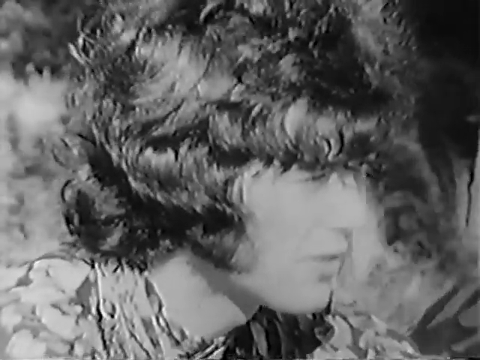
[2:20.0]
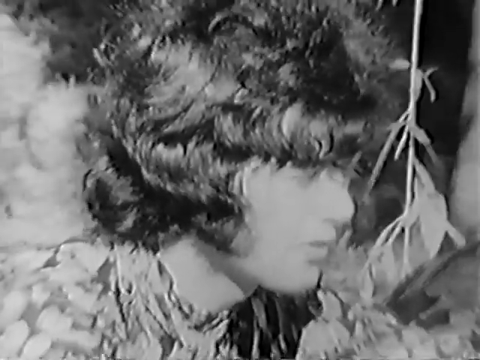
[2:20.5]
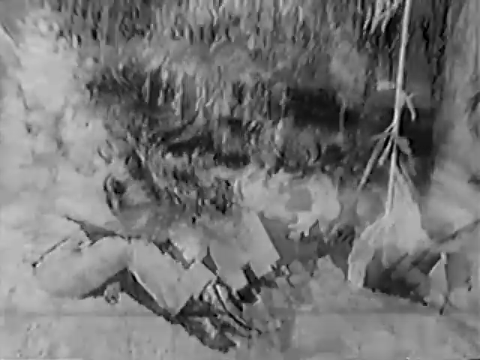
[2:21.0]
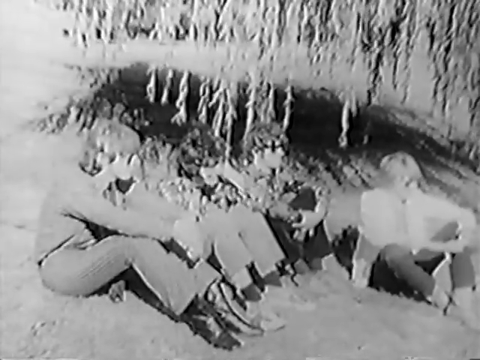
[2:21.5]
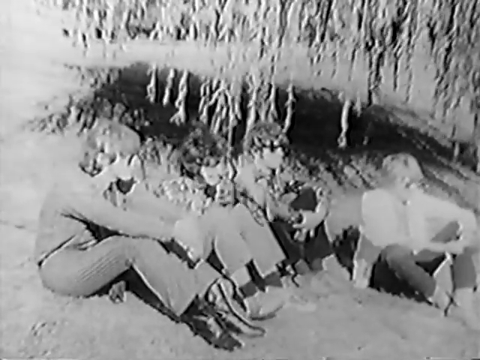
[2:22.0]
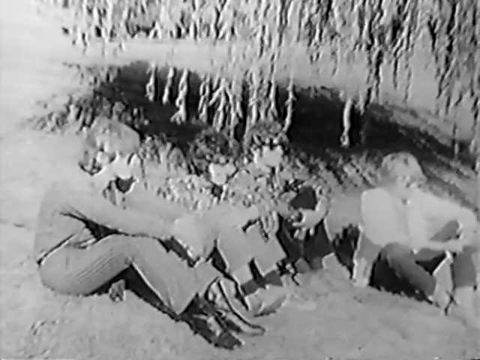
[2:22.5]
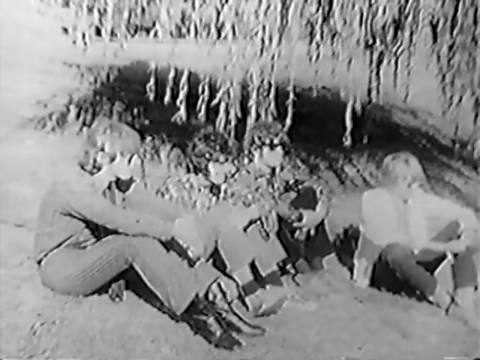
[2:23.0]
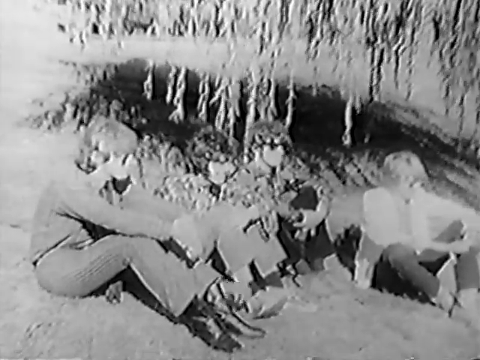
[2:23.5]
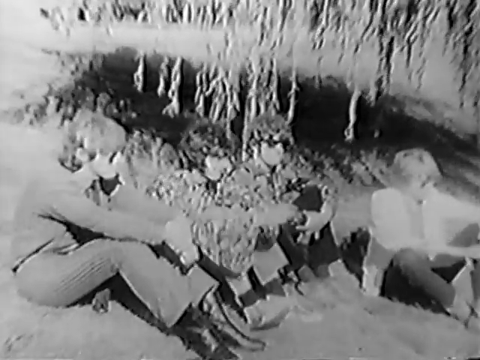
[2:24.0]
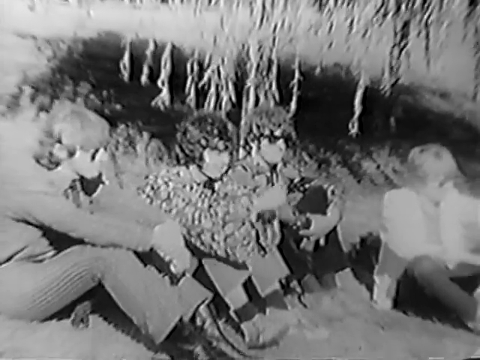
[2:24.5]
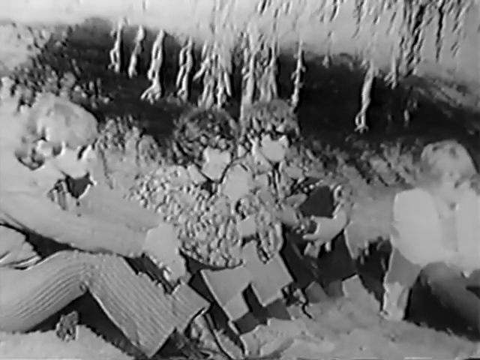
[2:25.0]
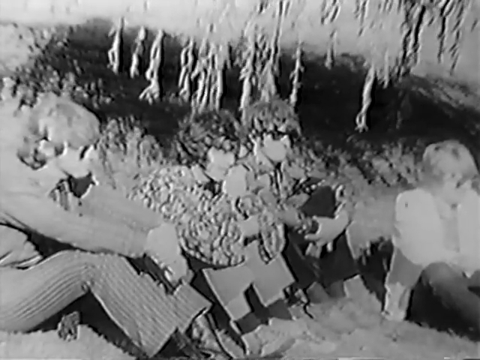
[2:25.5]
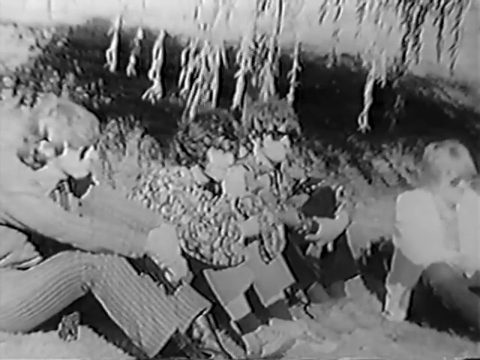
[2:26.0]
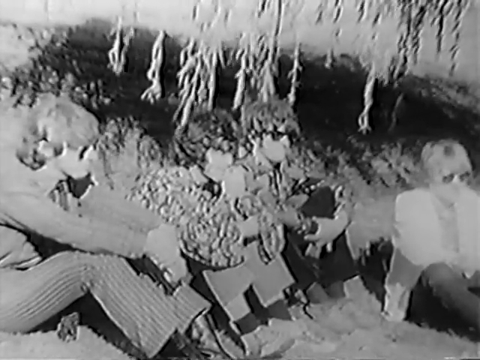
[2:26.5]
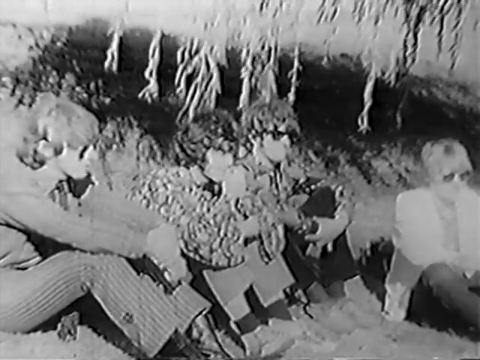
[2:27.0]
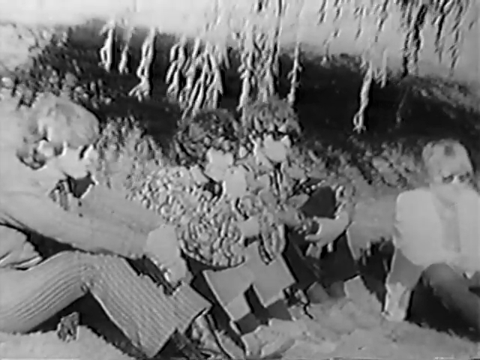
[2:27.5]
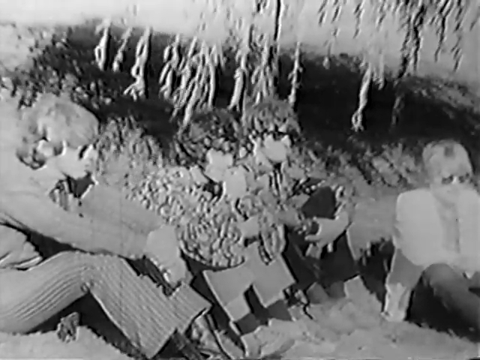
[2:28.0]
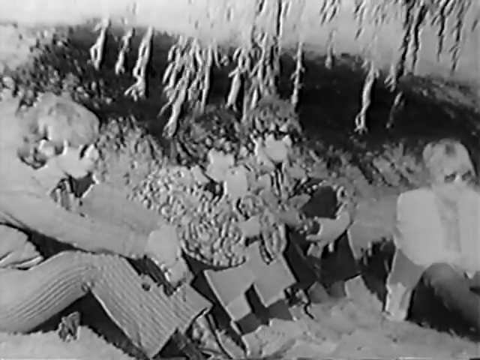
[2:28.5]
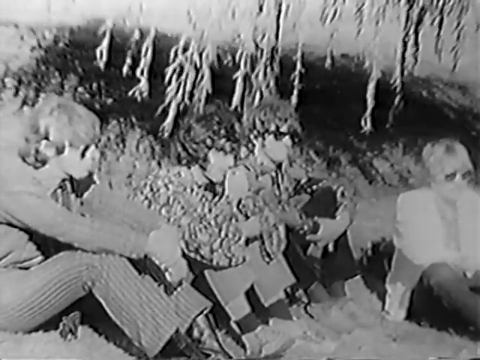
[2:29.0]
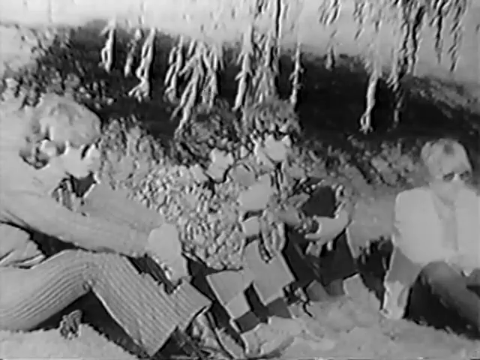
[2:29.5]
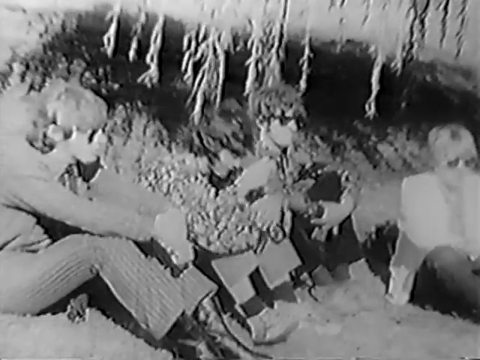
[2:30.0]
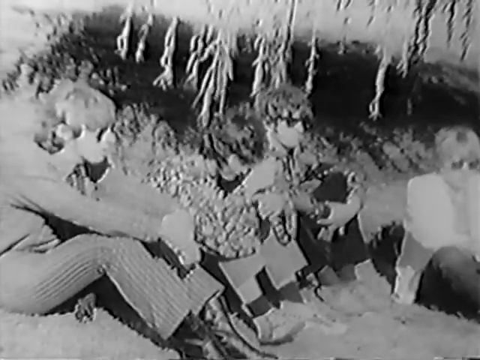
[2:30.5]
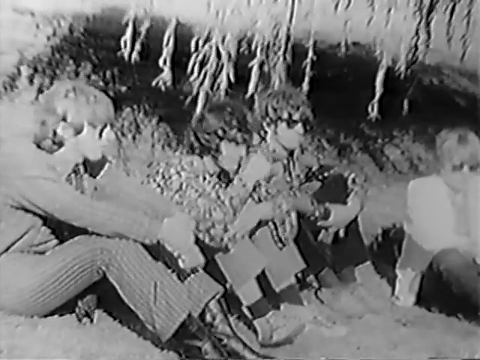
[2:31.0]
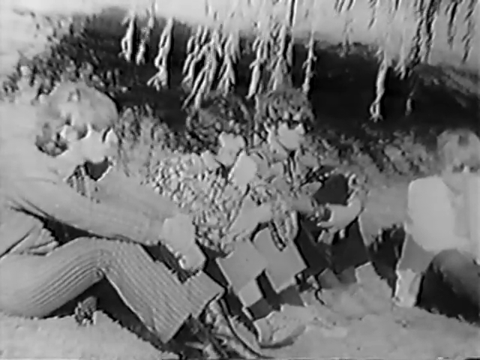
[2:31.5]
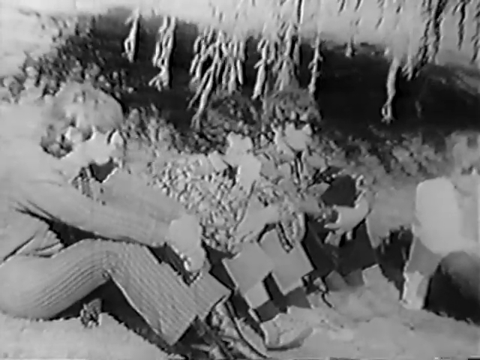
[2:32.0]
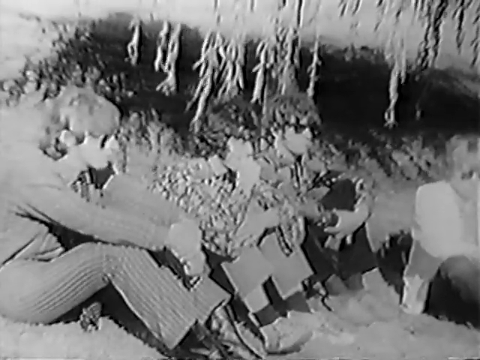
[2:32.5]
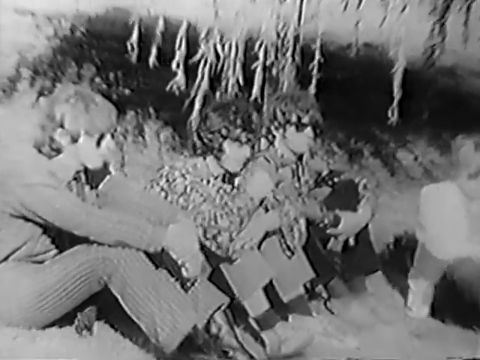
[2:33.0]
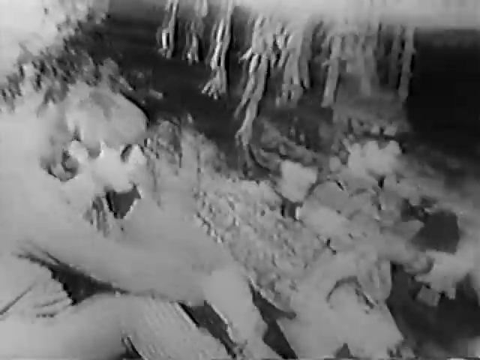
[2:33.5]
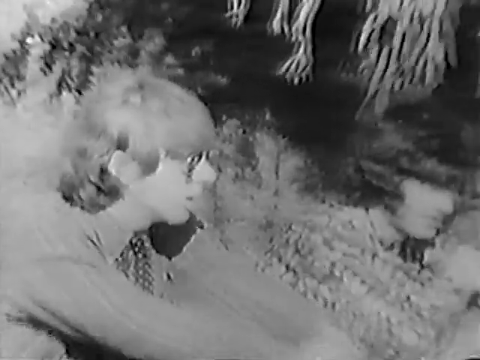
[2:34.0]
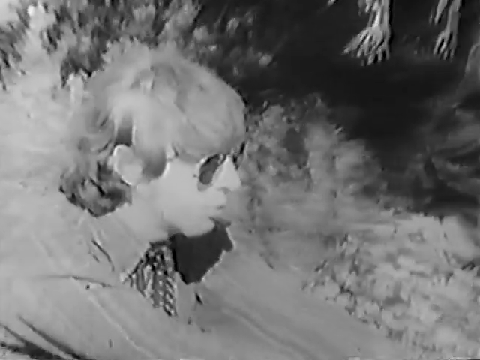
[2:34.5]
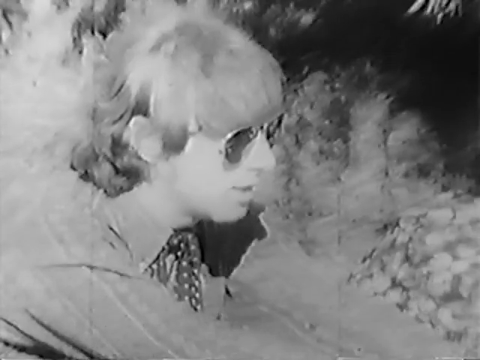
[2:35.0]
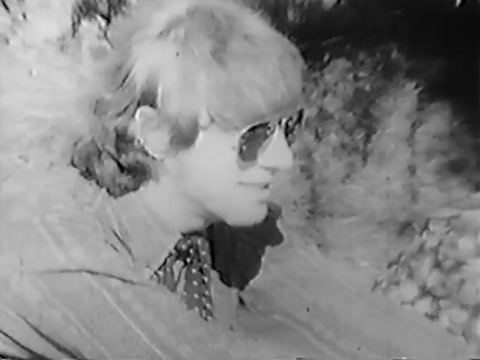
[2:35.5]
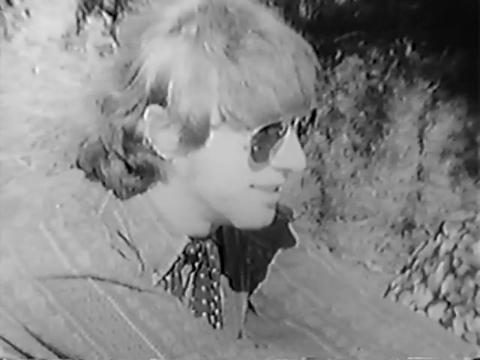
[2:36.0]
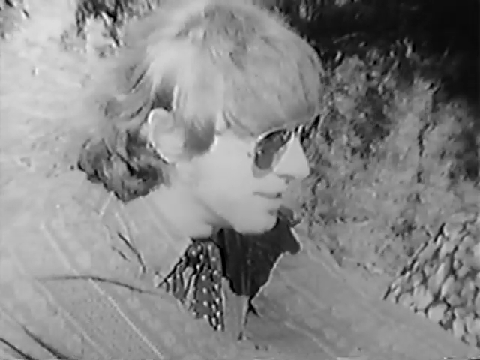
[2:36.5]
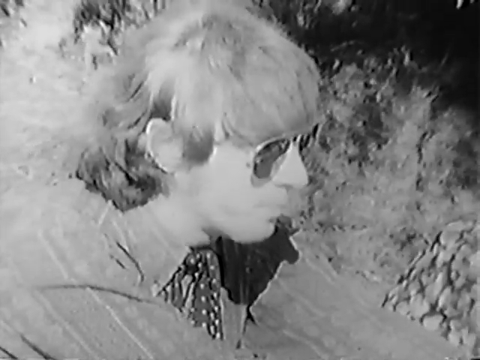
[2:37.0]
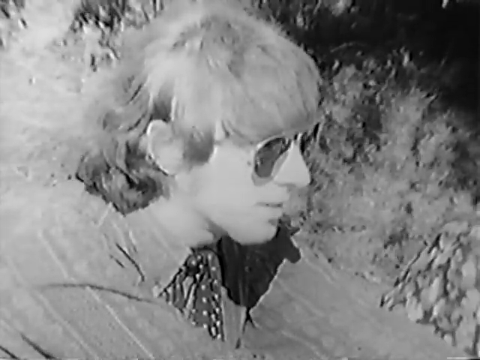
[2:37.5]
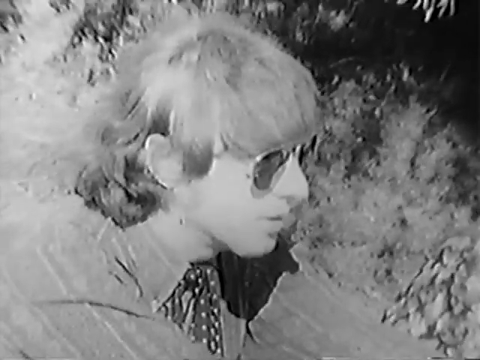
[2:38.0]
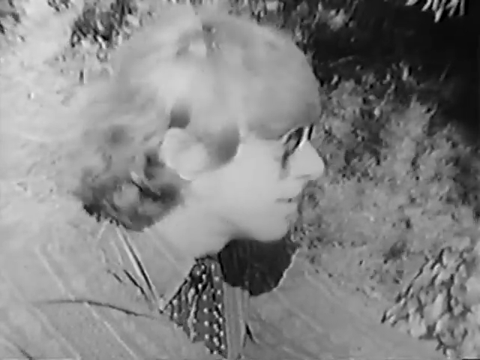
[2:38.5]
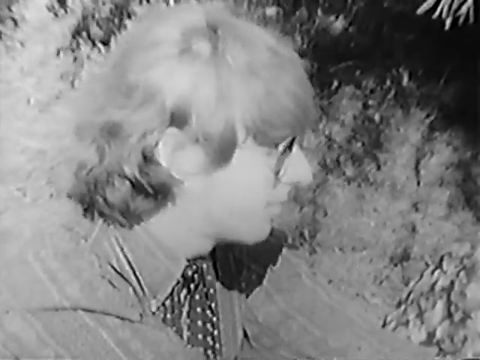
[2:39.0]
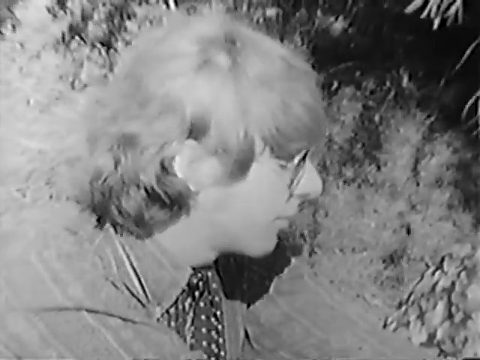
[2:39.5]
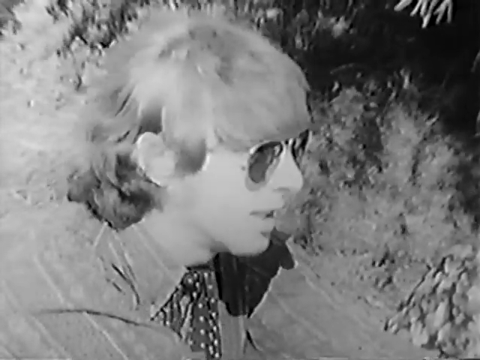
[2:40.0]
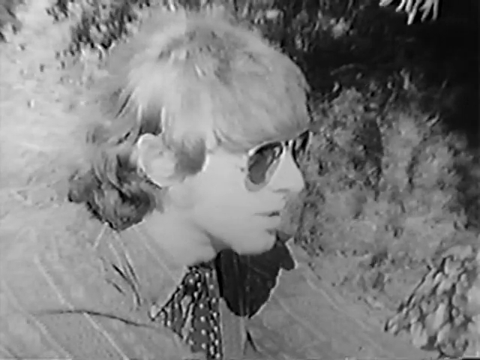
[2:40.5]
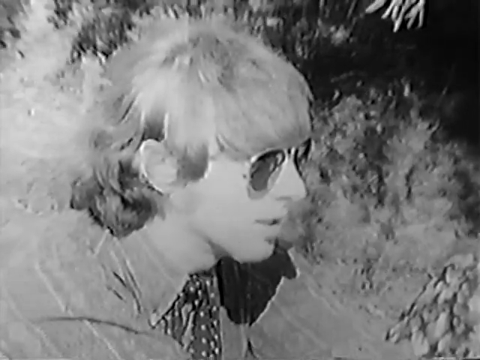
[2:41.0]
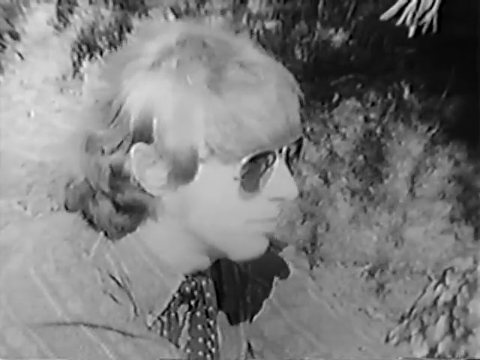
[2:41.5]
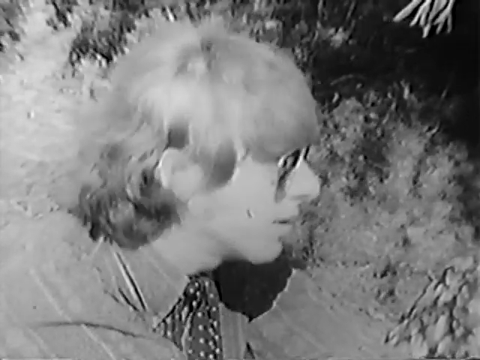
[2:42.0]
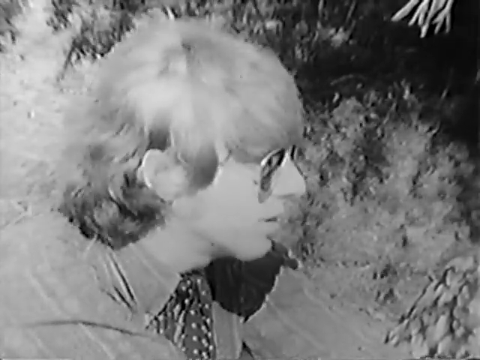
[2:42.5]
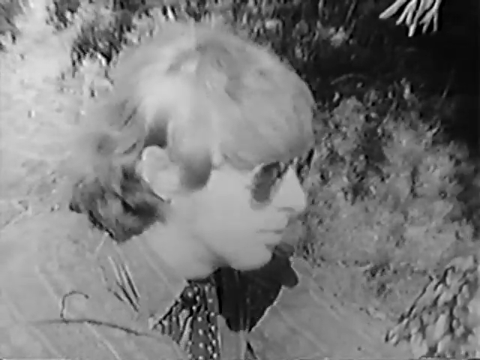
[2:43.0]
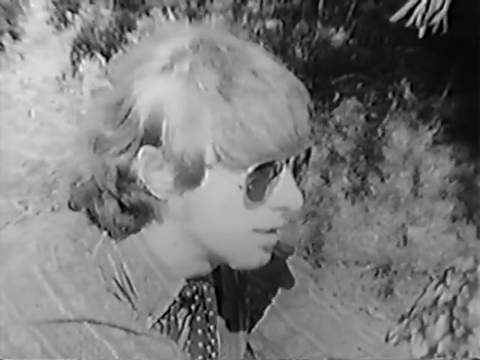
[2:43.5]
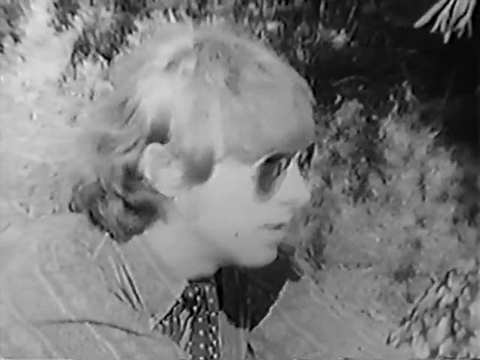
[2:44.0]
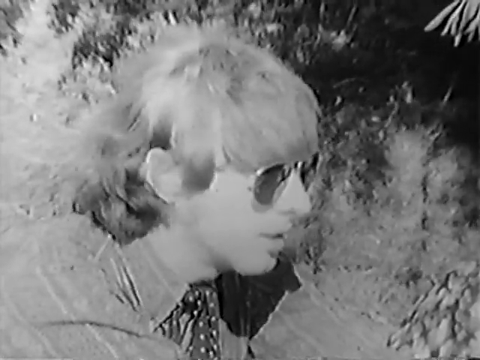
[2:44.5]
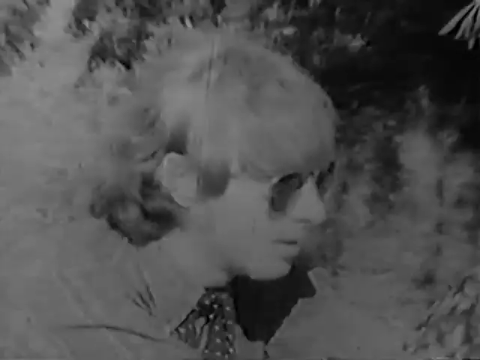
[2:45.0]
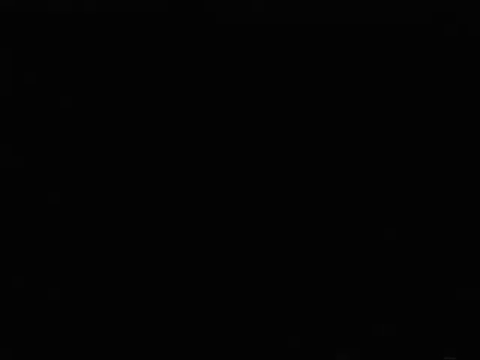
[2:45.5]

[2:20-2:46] The camera pans out from the close-up of the man in the middle. He touches his hair with his left arm, then bends his right arm at the elbow and touches his face, then looks down, and it looks almost like he is chewing on something or putting something in his mouth. The camera then focuses on the man sitting to his right, on the left of the screen, in a close-up. He has a kerchief tied like a bow under his collar; it is polka-dotted, dark with white polka dots, knotted at his neck. He has moppy, long blonde hair and sunglasses, and he is now doing most of the talking. The video then fades to black. The four men, in their 20s, seem to be from sometime in the late 60s or early 70s; they fidget and play with the grass around them as they seem to be interviewed by someone off-camera.